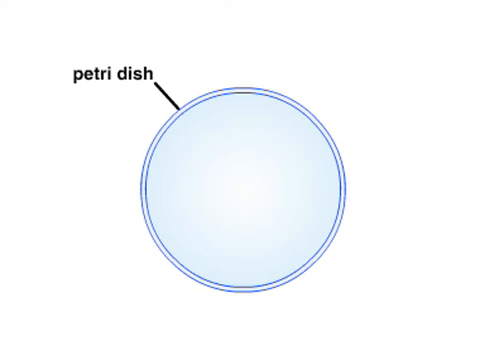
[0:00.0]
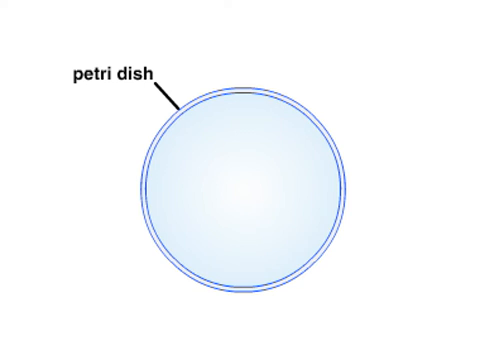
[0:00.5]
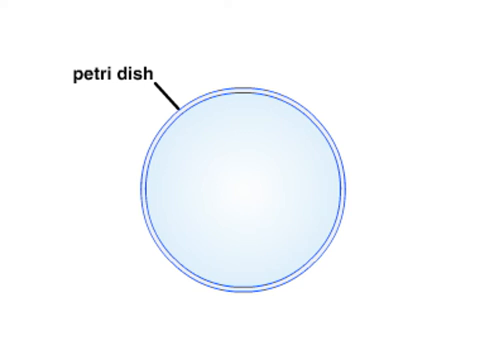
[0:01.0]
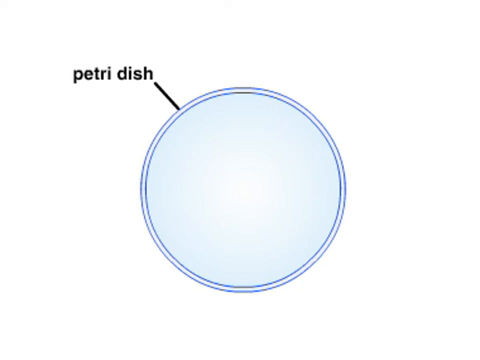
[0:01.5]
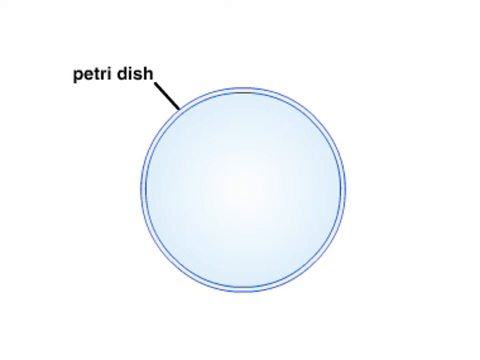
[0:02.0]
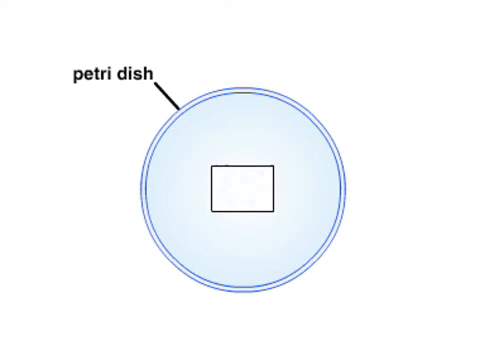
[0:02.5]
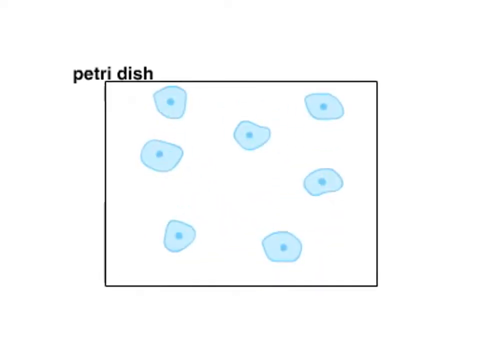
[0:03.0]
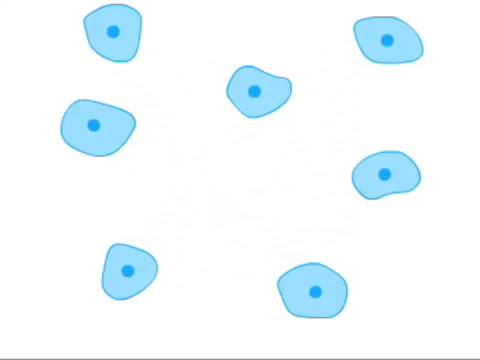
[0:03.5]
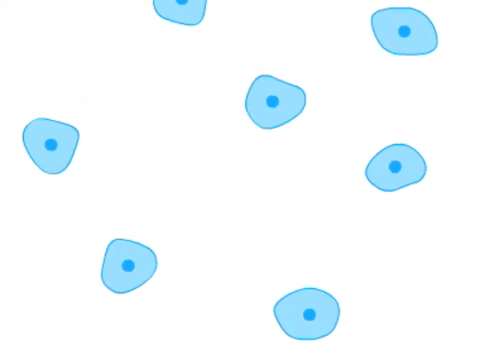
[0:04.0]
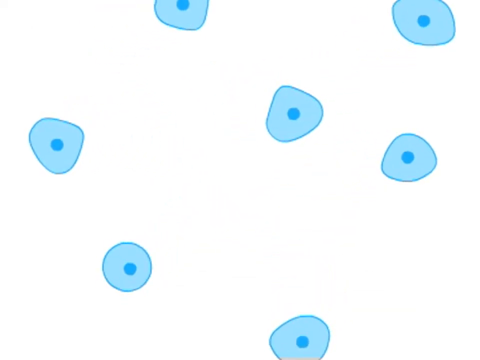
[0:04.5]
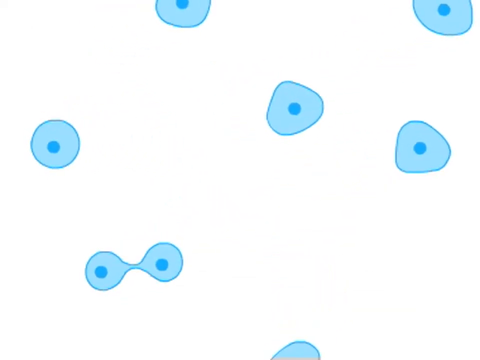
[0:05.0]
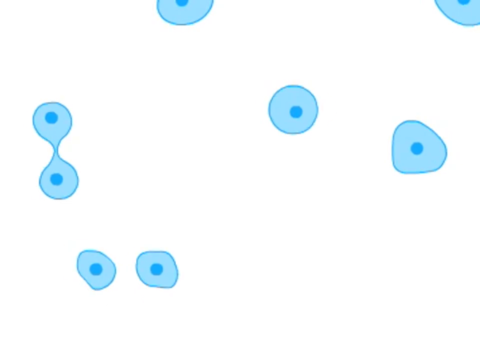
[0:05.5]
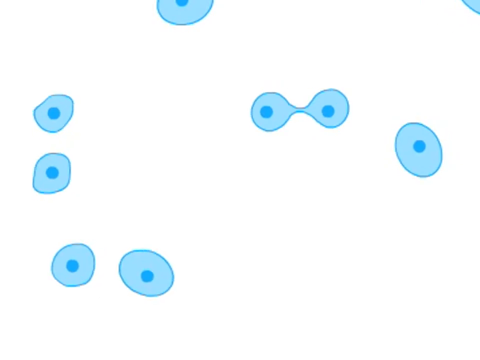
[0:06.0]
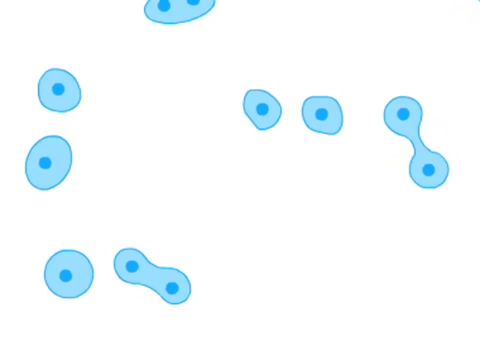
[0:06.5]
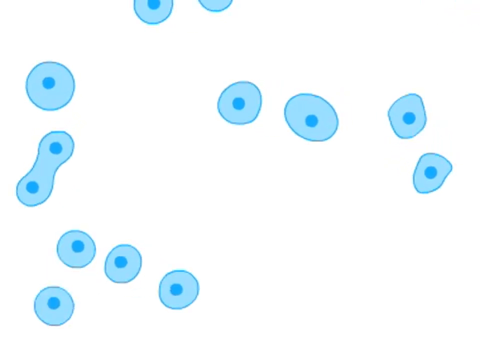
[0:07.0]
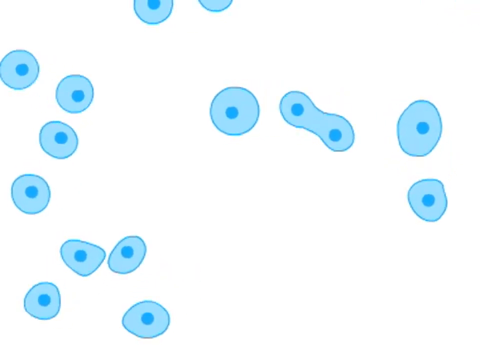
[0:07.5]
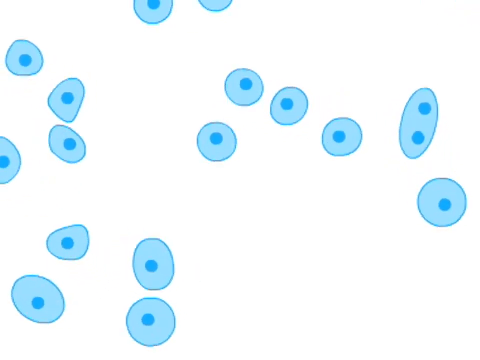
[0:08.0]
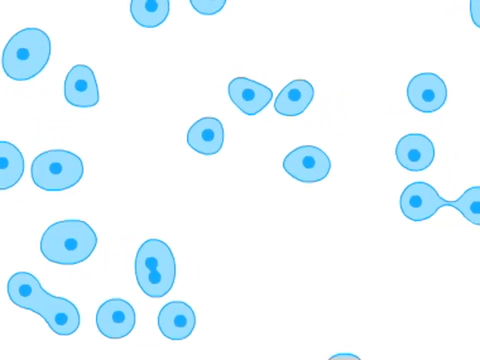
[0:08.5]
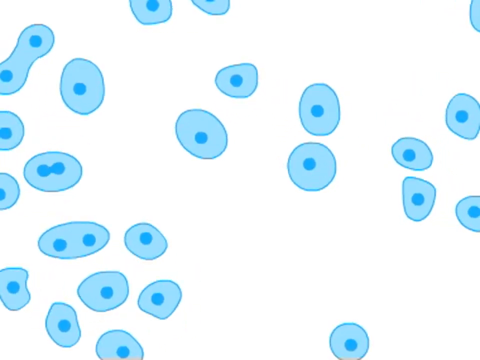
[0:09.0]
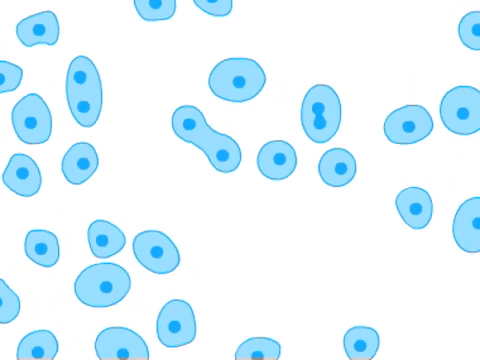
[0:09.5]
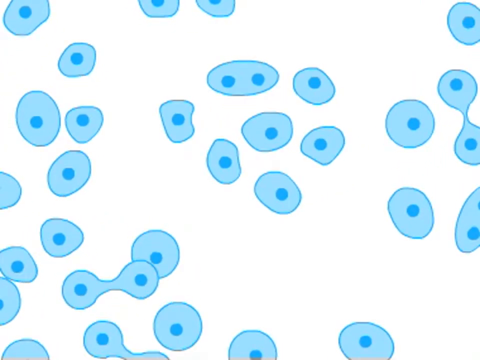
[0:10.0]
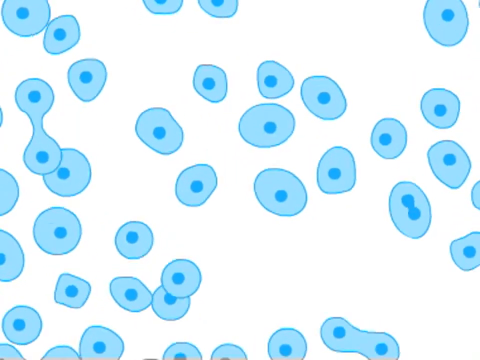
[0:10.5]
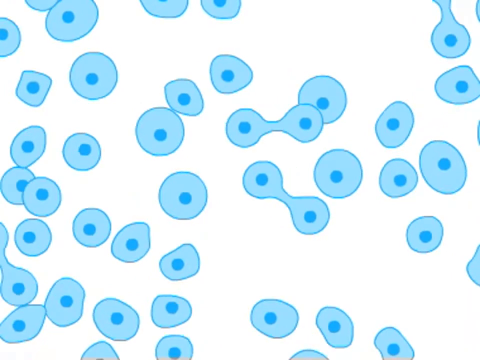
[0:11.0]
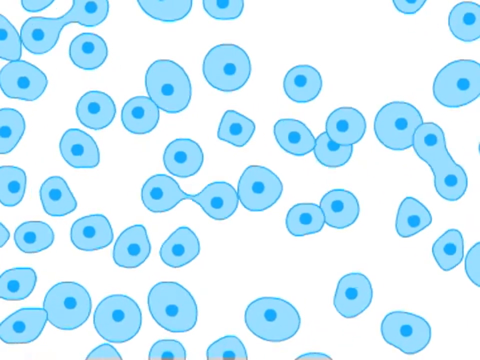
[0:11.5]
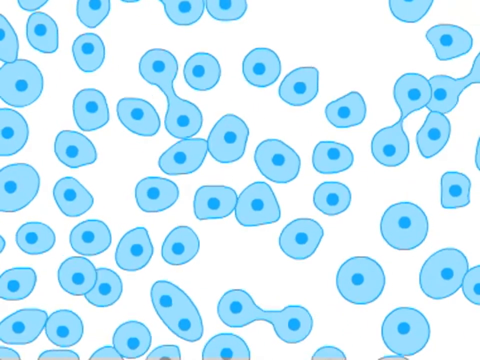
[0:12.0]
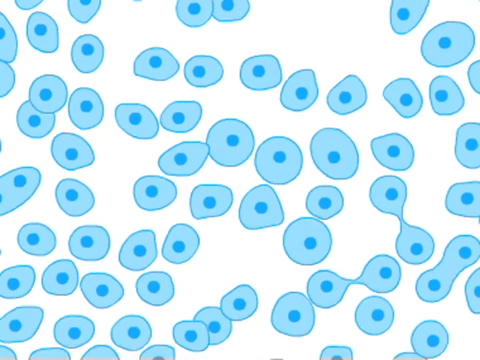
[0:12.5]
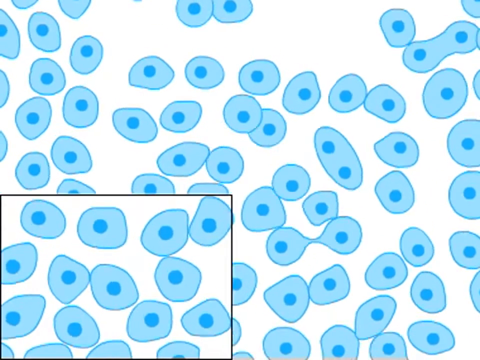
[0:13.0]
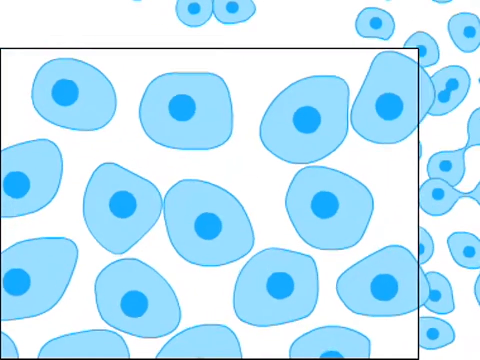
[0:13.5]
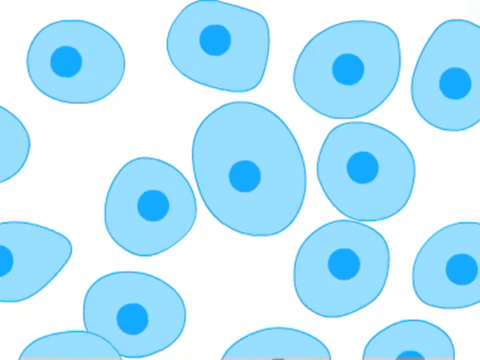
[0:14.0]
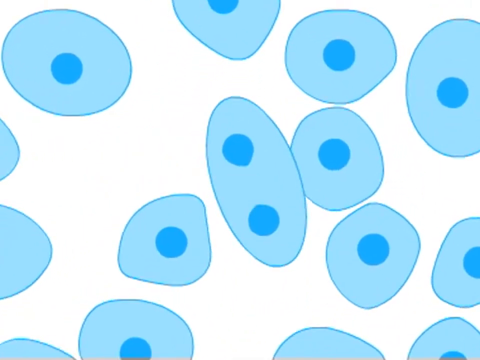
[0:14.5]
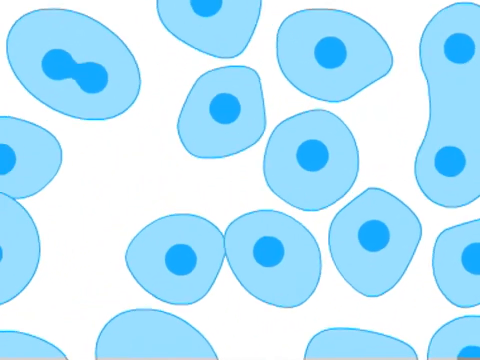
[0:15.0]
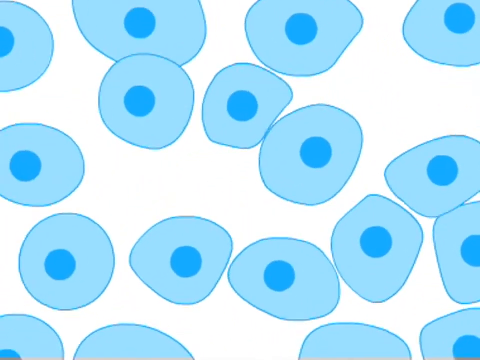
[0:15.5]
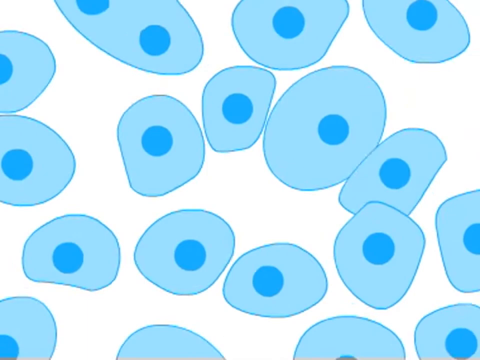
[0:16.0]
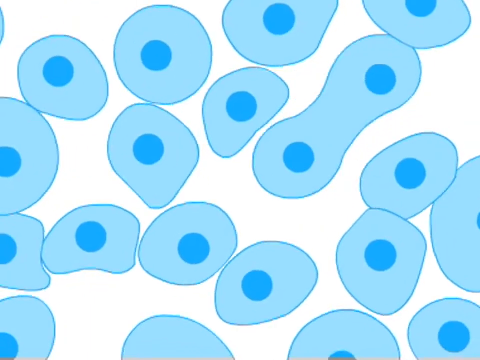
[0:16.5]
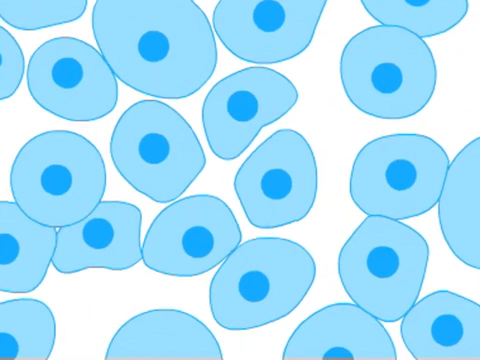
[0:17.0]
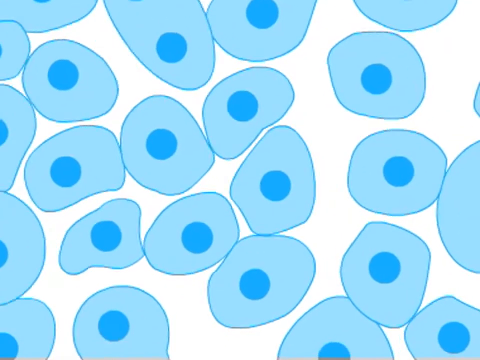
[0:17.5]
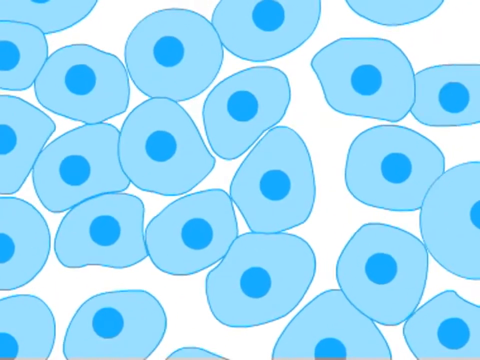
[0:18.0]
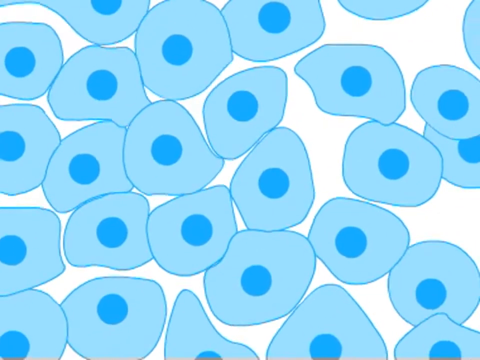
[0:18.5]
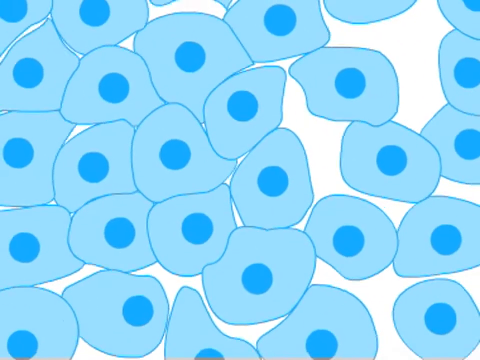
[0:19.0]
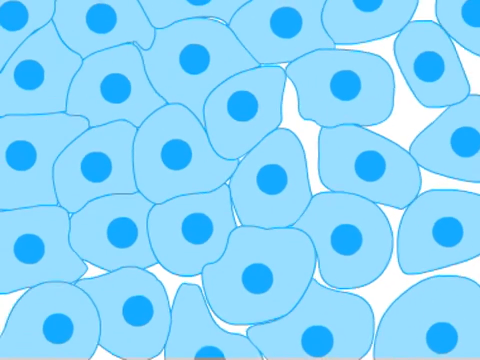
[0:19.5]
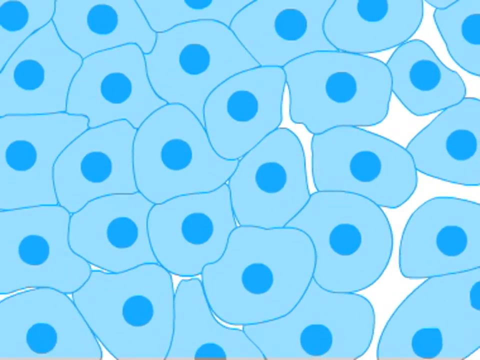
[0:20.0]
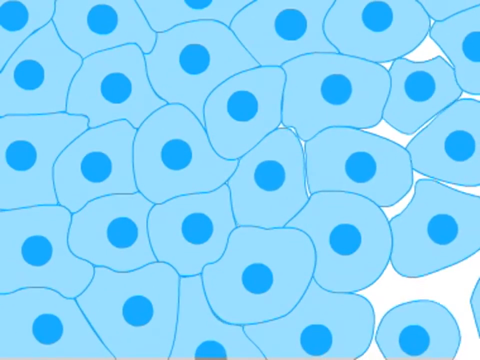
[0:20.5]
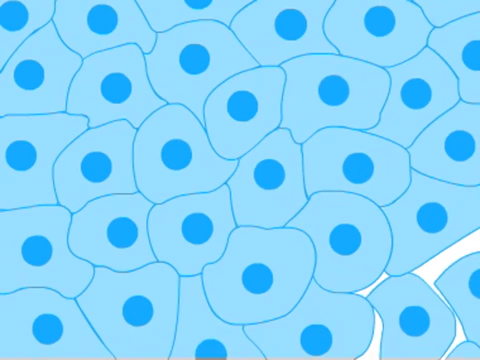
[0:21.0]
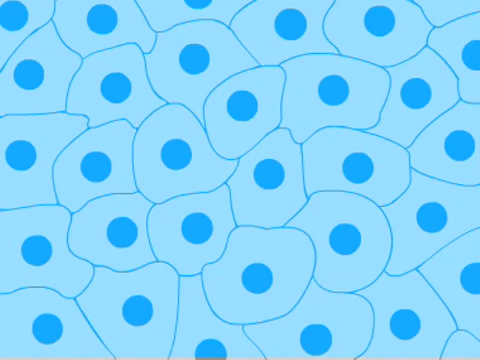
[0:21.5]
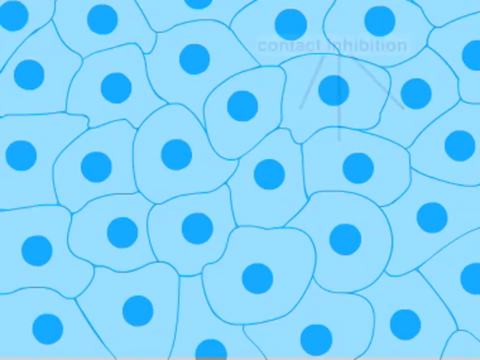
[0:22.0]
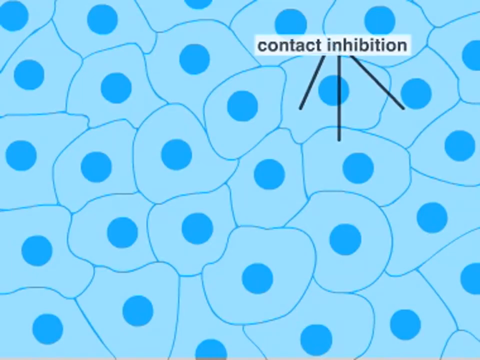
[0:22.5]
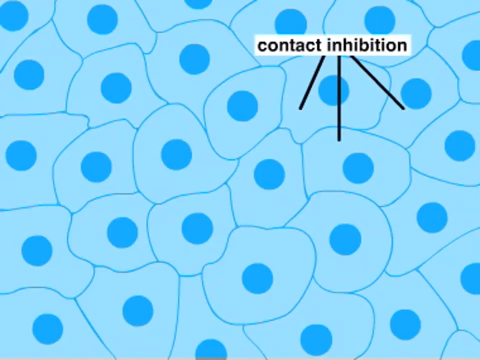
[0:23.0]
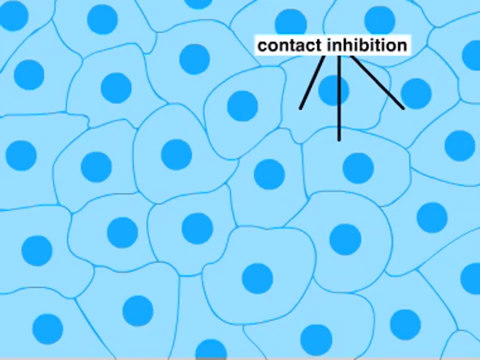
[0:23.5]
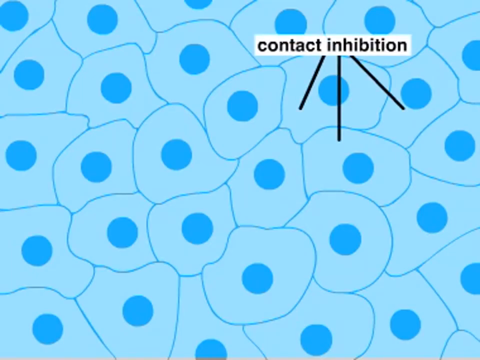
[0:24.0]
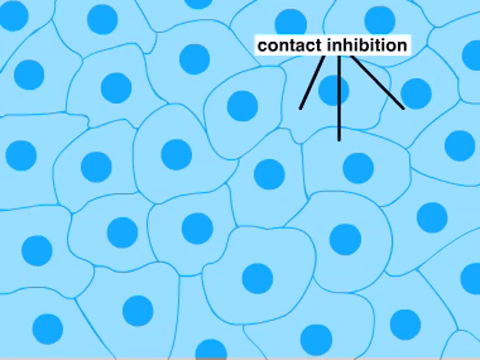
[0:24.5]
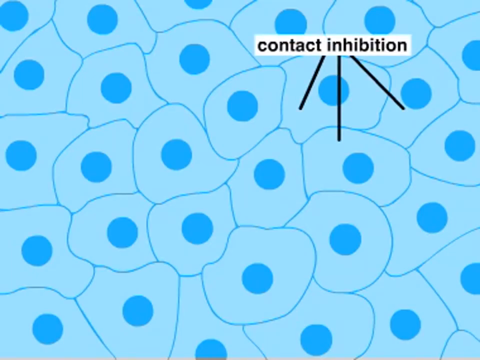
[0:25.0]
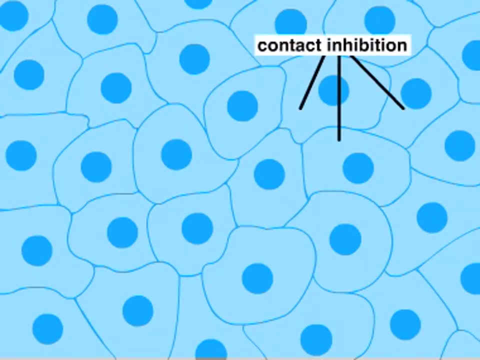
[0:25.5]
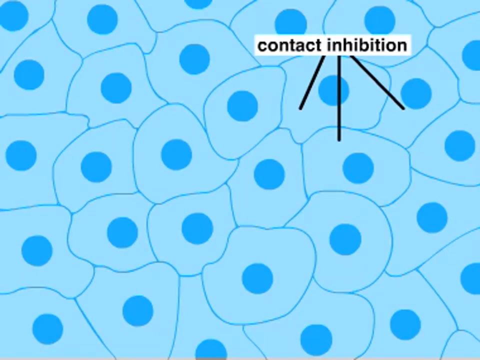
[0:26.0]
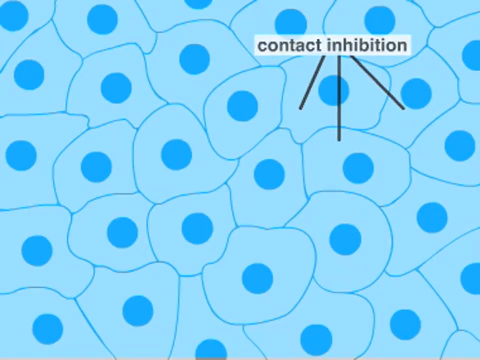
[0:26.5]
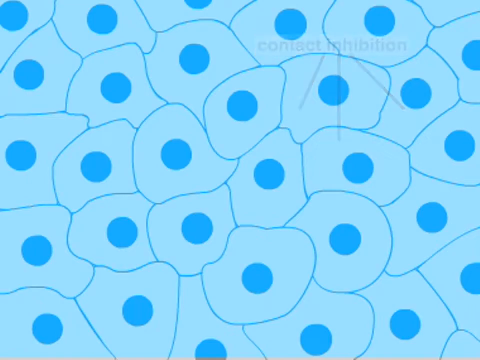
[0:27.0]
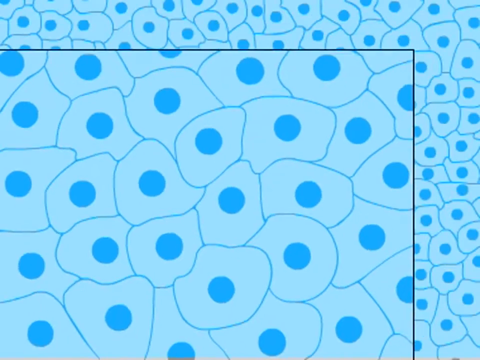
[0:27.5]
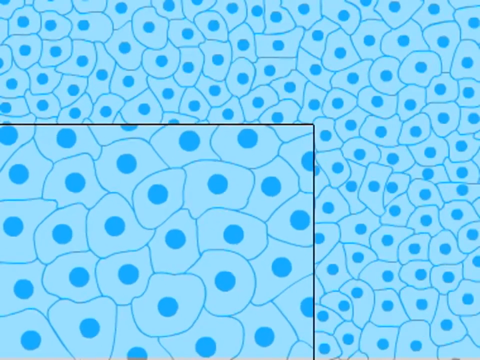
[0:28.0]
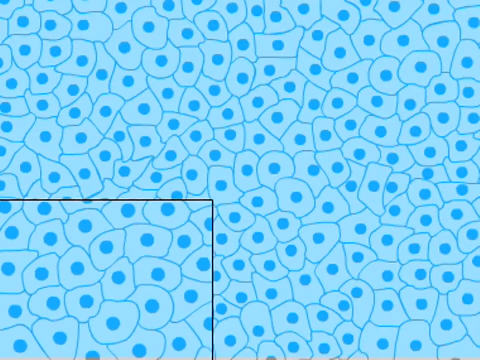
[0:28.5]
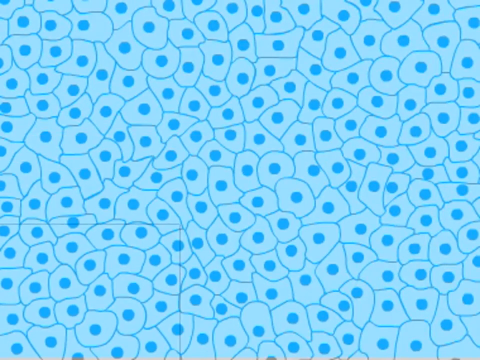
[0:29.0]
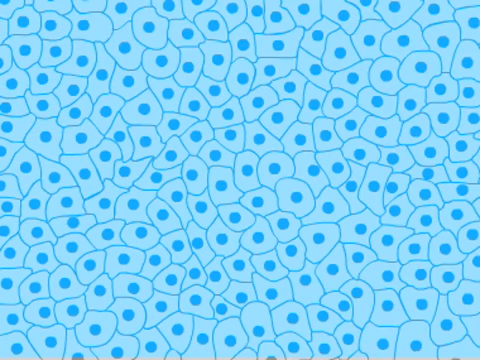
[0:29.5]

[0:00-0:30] A diagram of a circle labeled "Petri dish" opens the video. A rectangle expands from it, and little blue dots morph out of each other, creating more and more blue dots. The view zooms in, showing the dots becoming increasingly clustered as they multiply from one another, and the label "contact inhibition" appears. The dots become so smashed together that they are no longer multiplying inside the Petri dish. Each dot is a light, clear blue, outlined in dark blue, with a circular dark blue dot at its center. As they move around, one dot splits into two, so the multiplication happens very rapidly, the dots multiplying by twos until there is no room left and they fill the entire Petri dish.